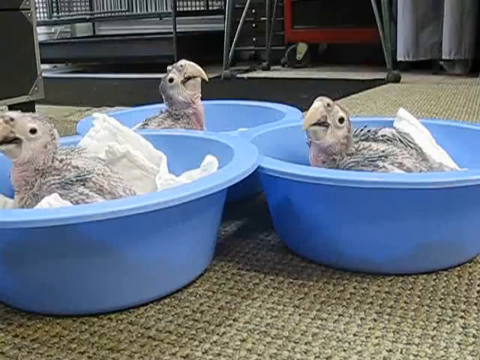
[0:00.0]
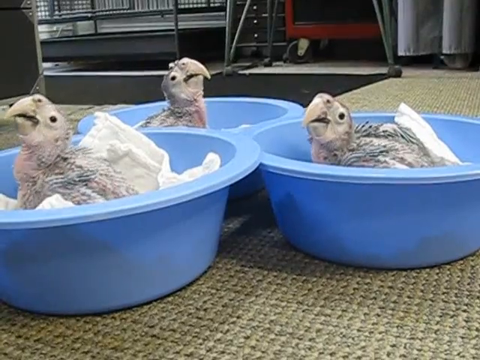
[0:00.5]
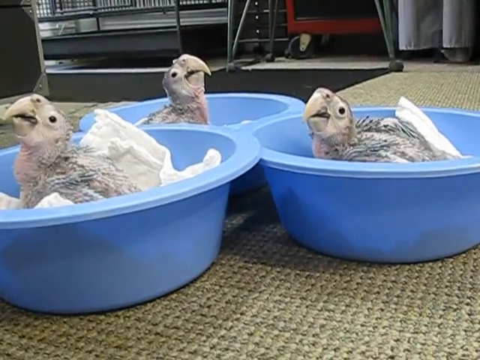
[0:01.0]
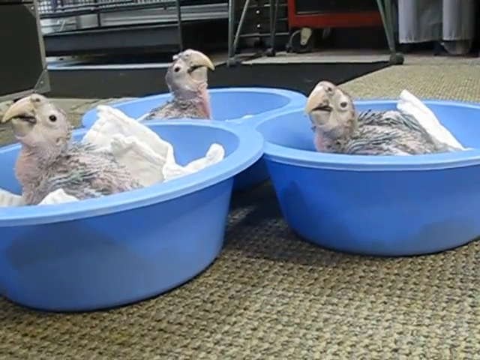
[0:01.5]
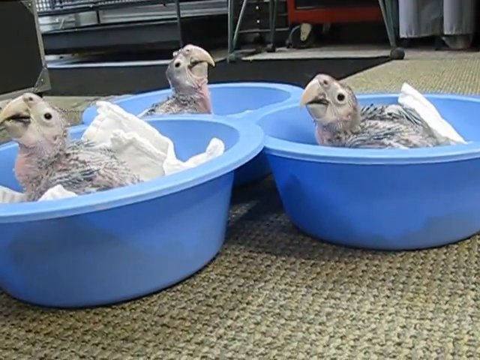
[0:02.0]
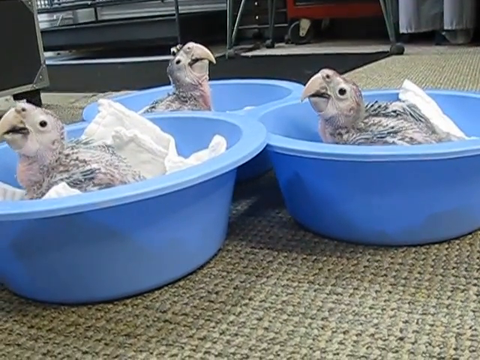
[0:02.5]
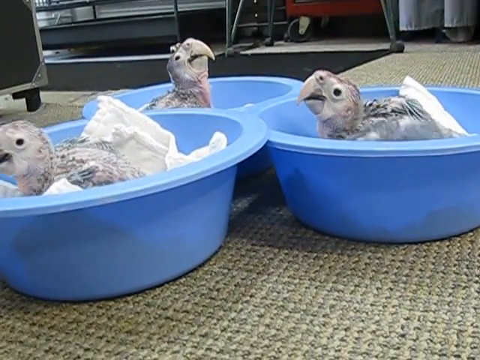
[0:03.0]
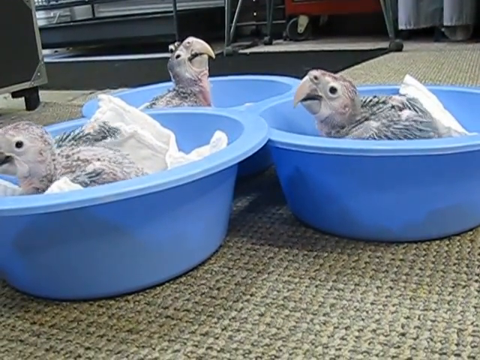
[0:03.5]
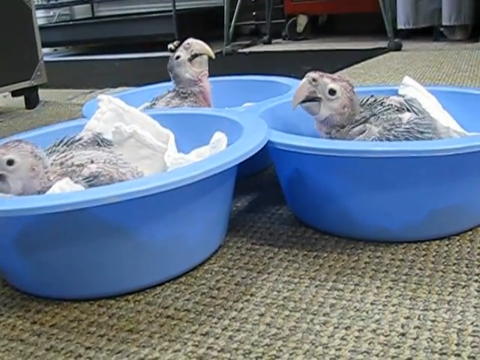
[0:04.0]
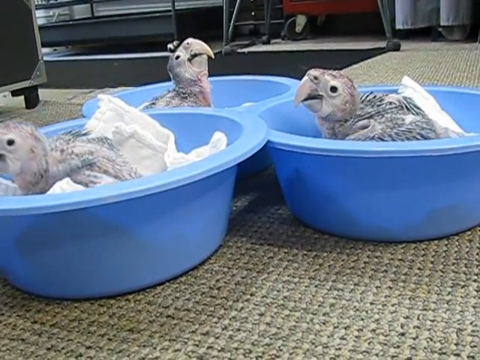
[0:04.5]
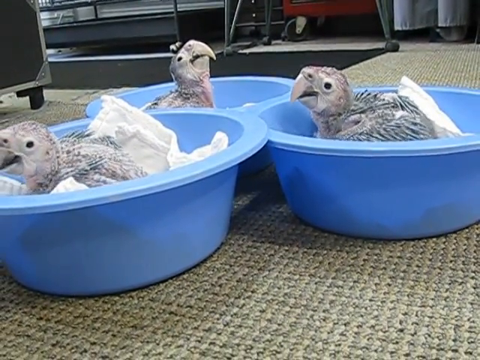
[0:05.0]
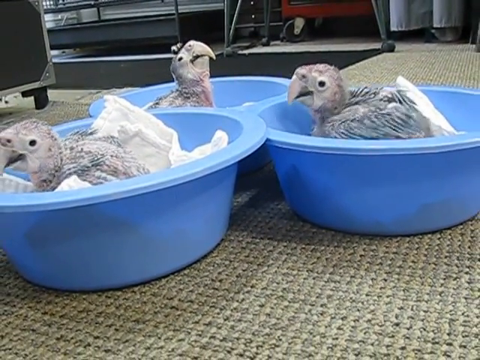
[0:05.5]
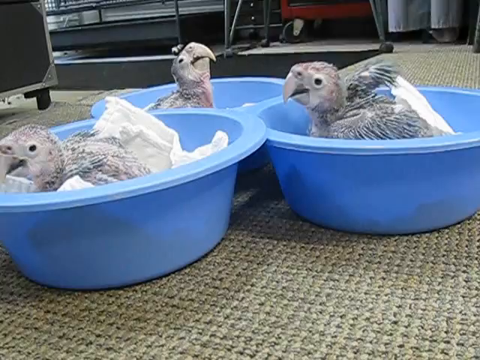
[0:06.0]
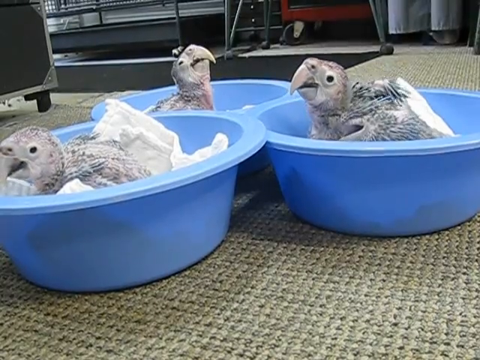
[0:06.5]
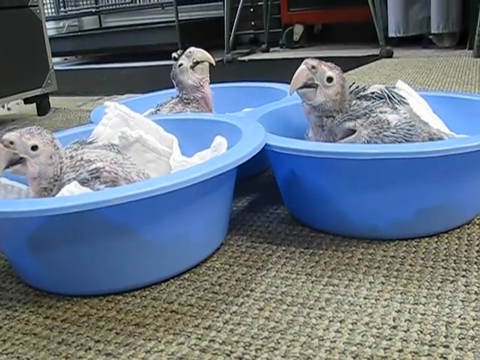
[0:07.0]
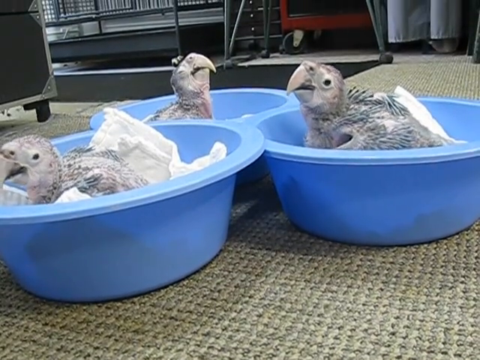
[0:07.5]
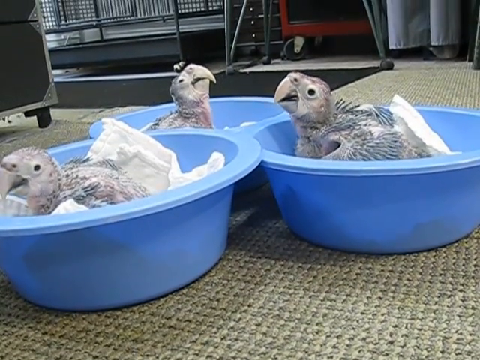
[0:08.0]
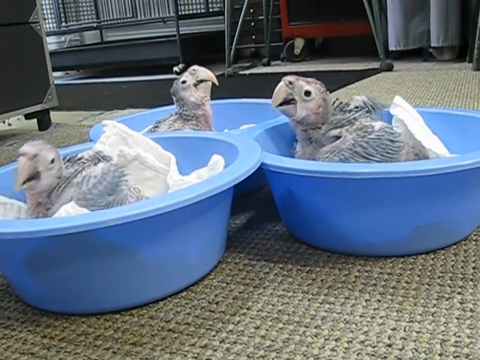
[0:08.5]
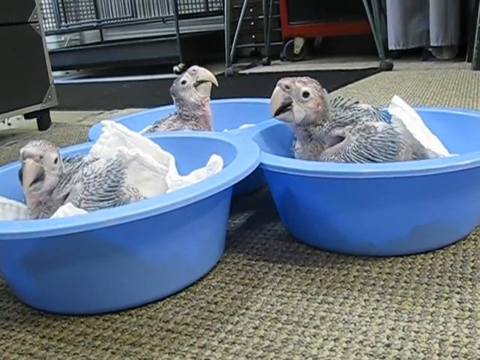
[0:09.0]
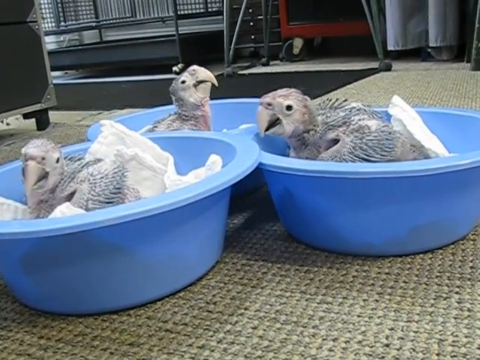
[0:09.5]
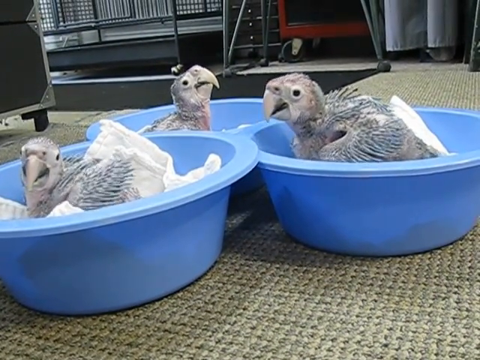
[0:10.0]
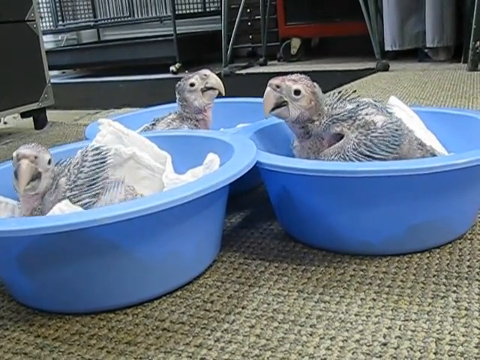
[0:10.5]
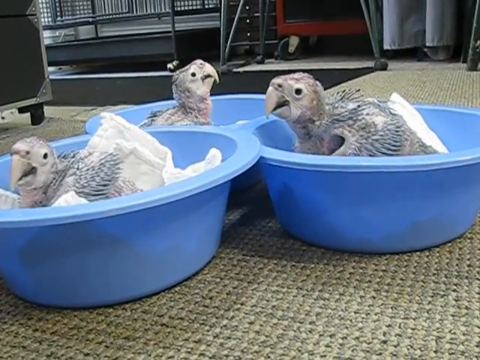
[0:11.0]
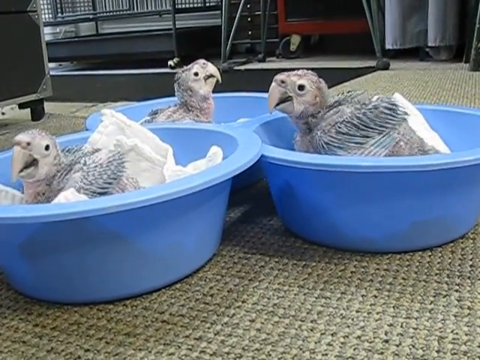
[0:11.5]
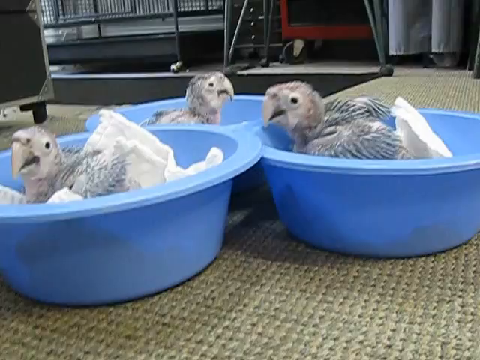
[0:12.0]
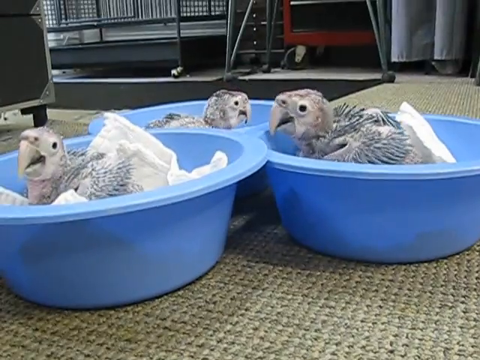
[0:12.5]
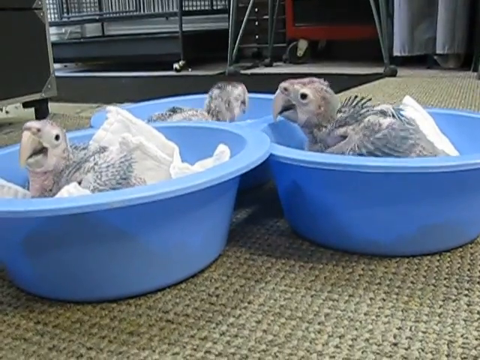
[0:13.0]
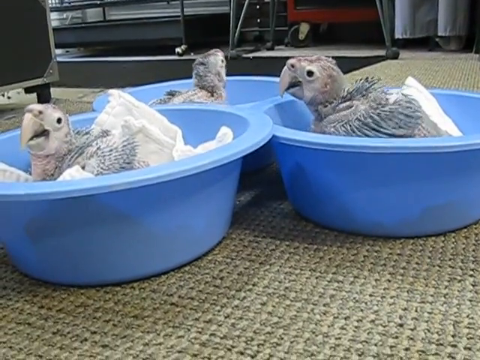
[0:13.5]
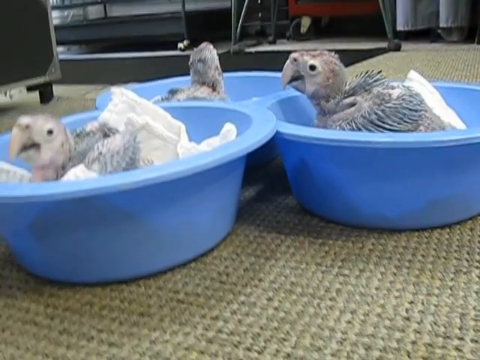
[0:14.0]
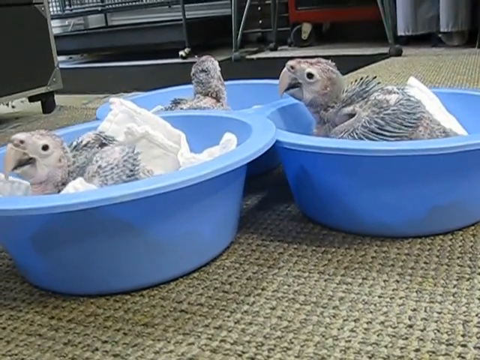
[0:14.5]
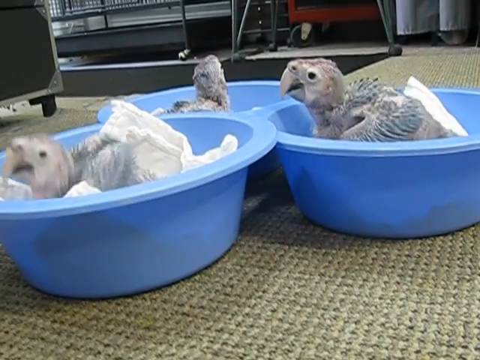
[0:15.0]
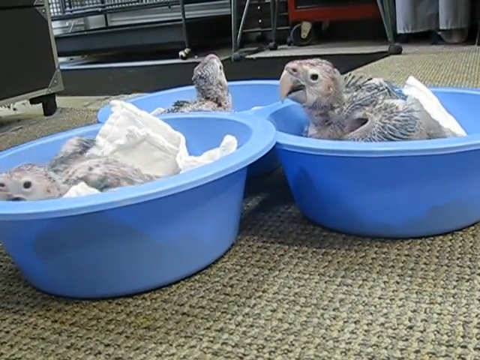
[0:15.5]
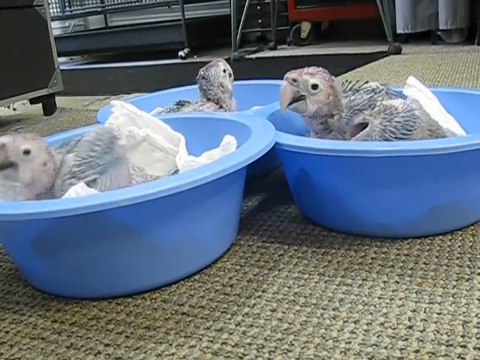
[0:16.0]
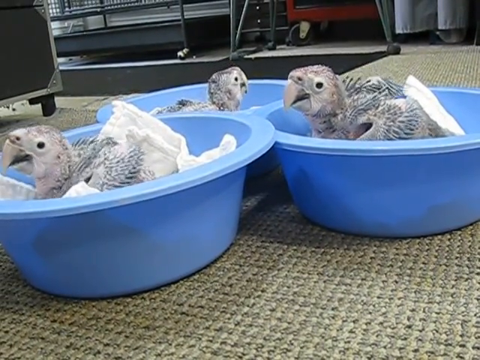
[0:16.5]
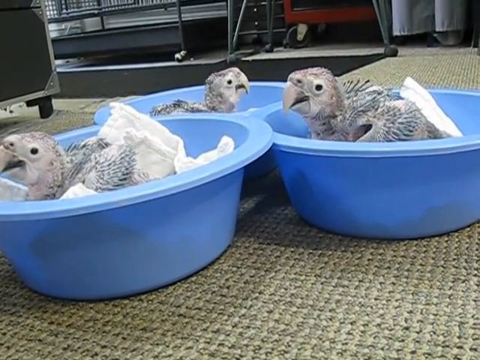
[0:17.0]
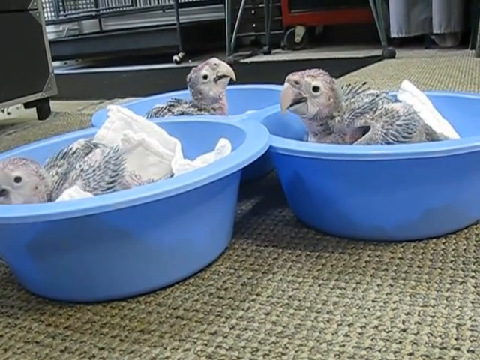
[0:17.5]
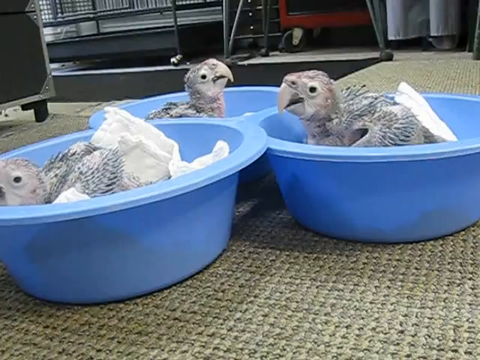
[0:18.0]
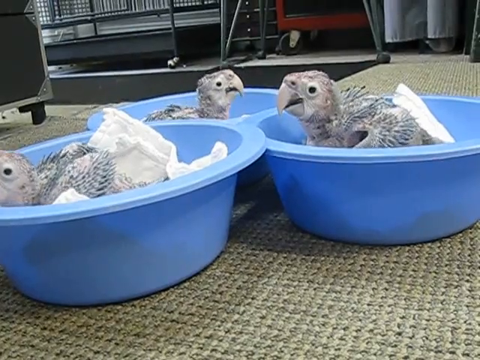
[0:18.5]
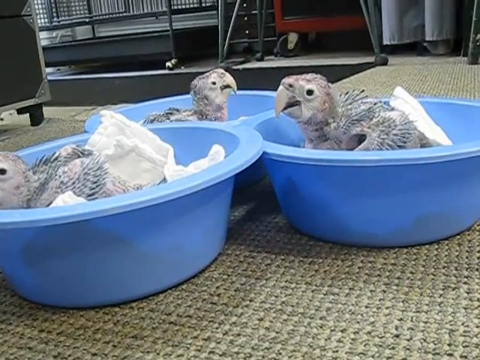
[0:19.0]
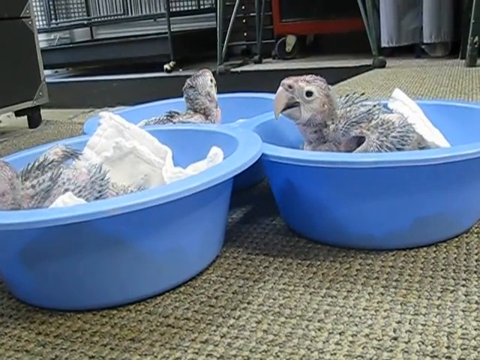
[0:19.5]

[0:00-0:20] Metal cages fill the background, and in the middle of the screen are three blue buckets, each with a white blanket inside. On each of the three is one bird; the birds are moving and seem to be looking at someone in particular who is off camera. Their feathers are white and also black, and as they move they almost look as if they are opening their wings. Their eyes are black and their beaks are white. The first bird on the left shakes its wings a bit while moving, the second one to the right does it as well, mainly lifting its right wing, and the quieter one in the back only shakes its left wing a bit. They seem to be quite recently born little pigeons.